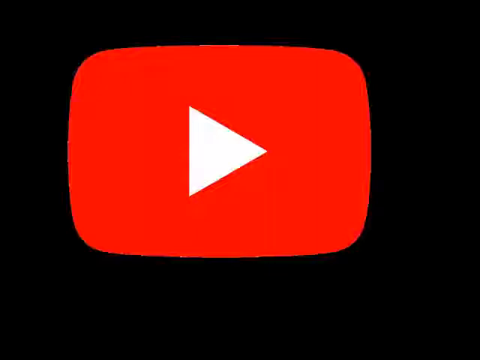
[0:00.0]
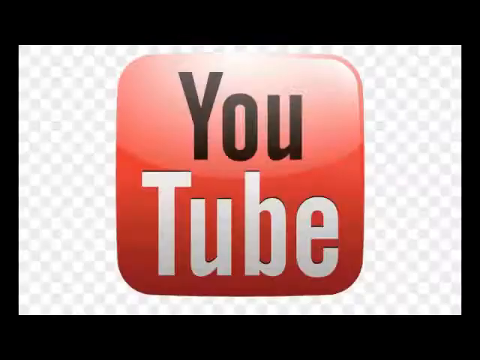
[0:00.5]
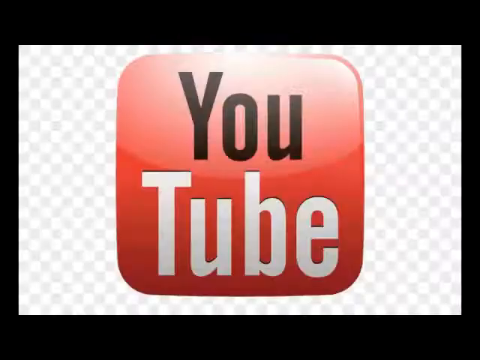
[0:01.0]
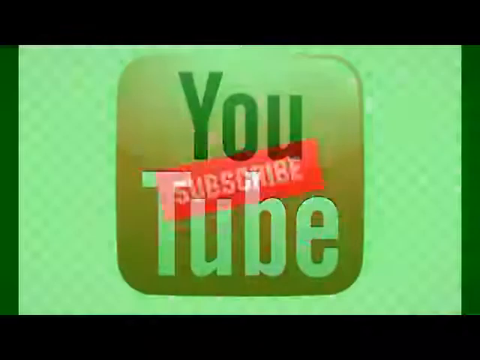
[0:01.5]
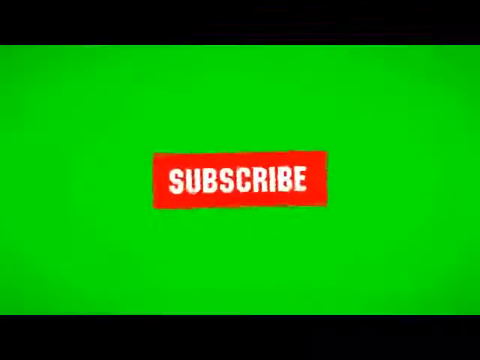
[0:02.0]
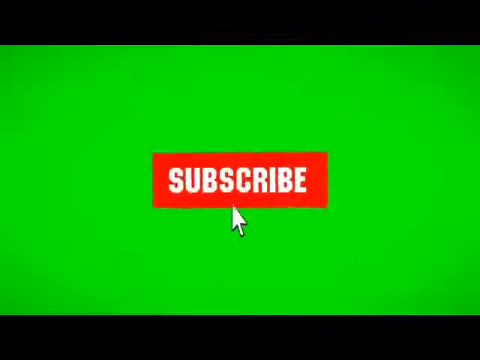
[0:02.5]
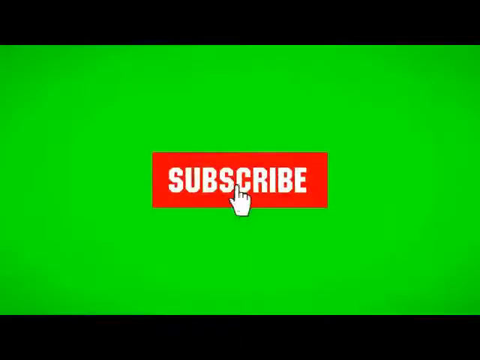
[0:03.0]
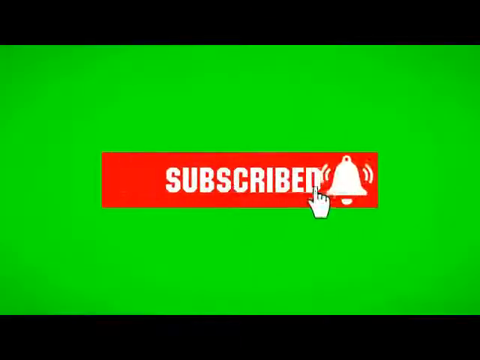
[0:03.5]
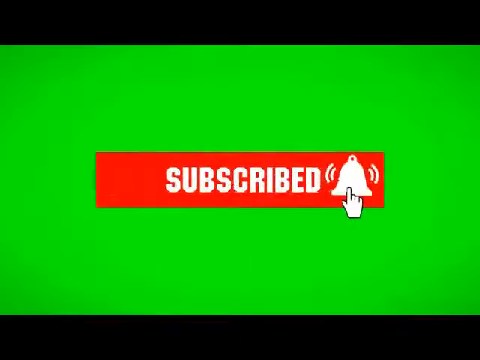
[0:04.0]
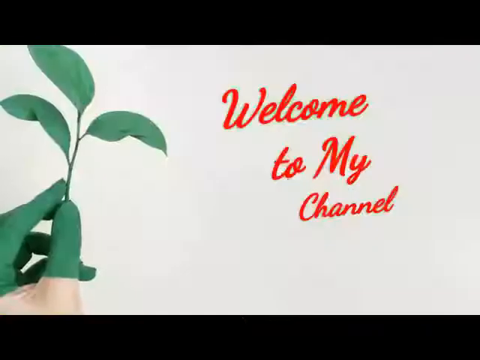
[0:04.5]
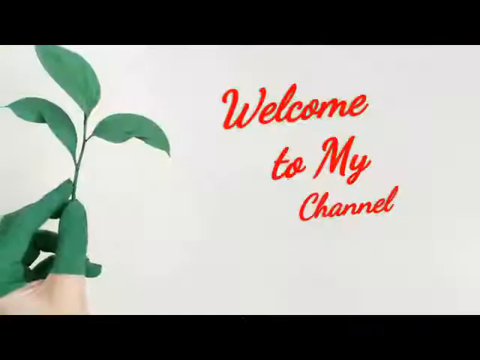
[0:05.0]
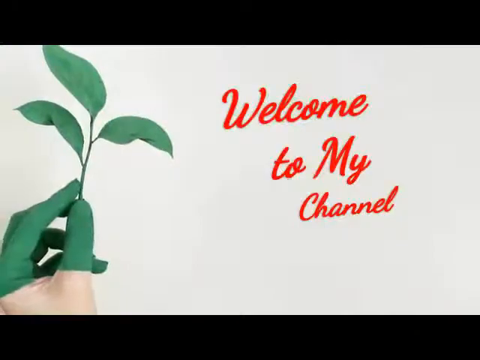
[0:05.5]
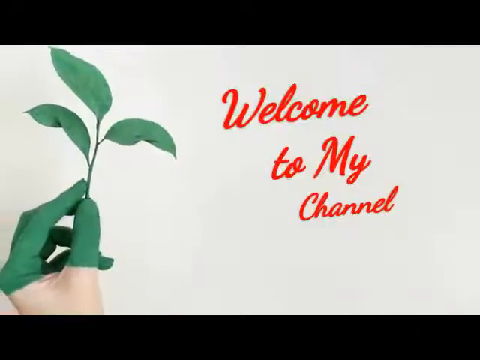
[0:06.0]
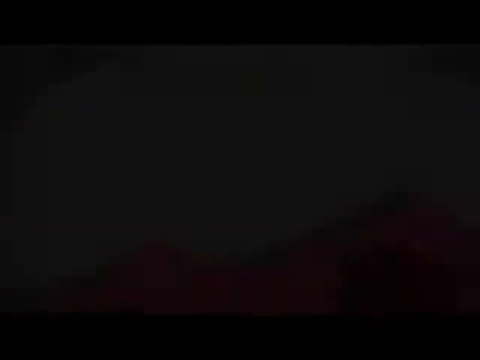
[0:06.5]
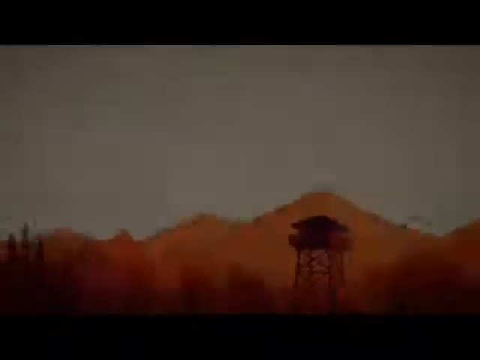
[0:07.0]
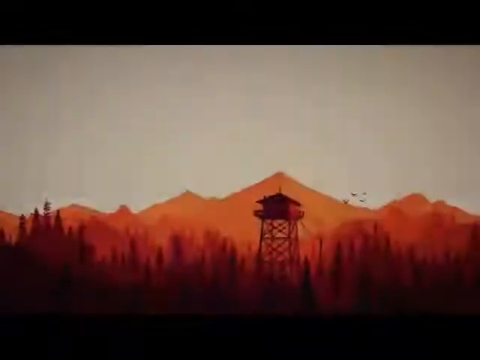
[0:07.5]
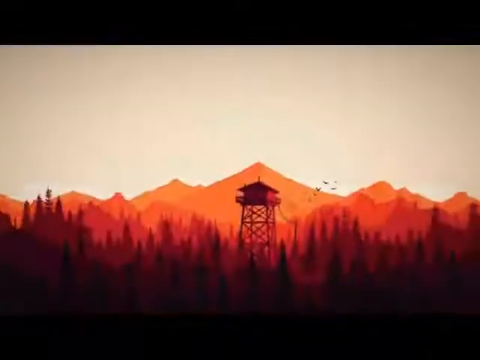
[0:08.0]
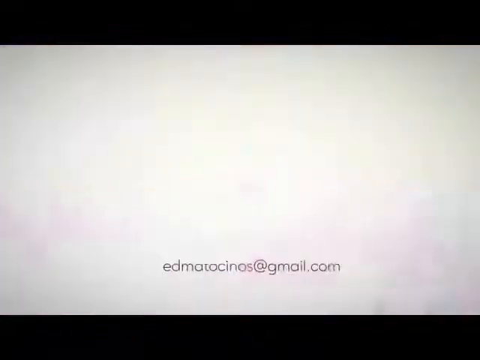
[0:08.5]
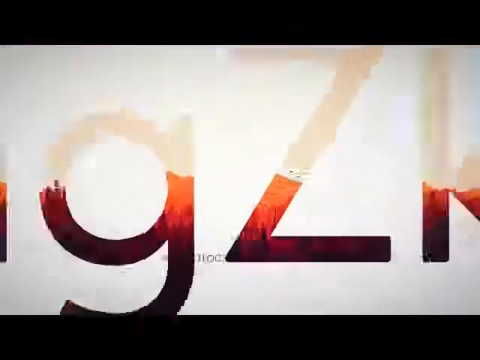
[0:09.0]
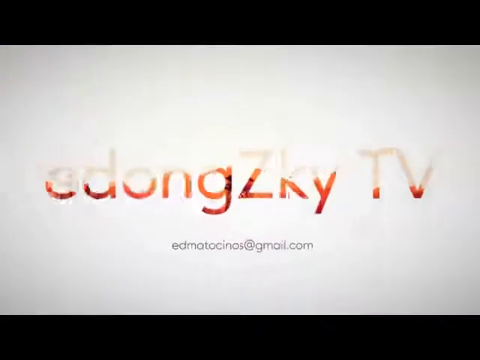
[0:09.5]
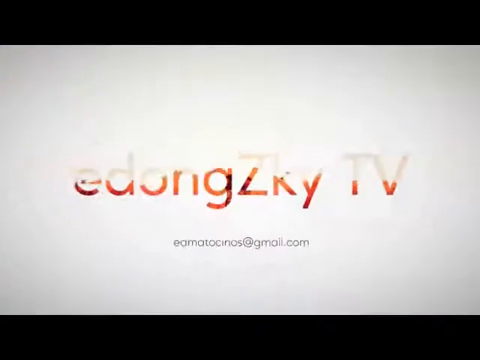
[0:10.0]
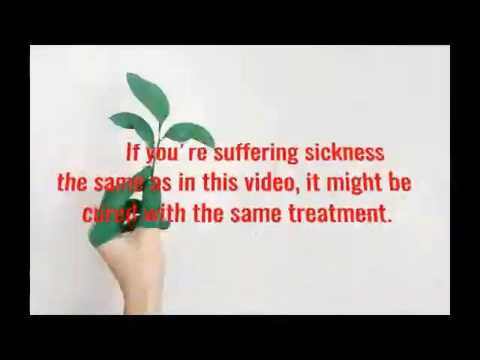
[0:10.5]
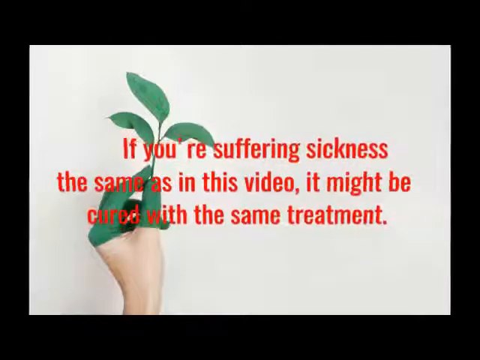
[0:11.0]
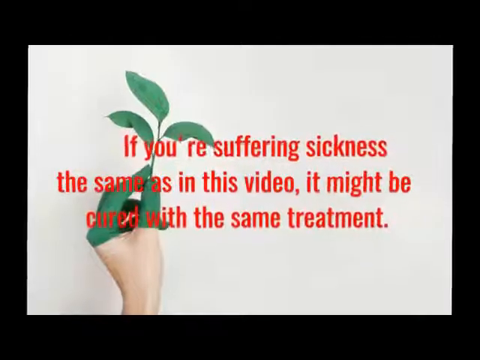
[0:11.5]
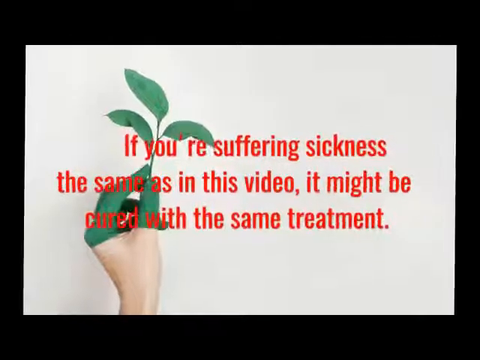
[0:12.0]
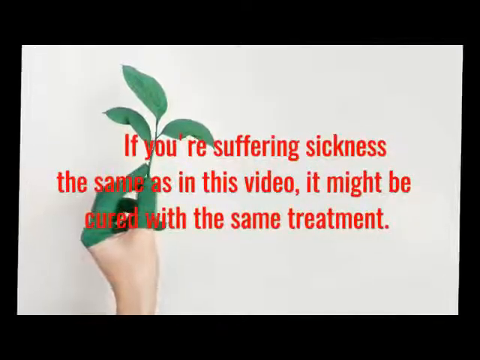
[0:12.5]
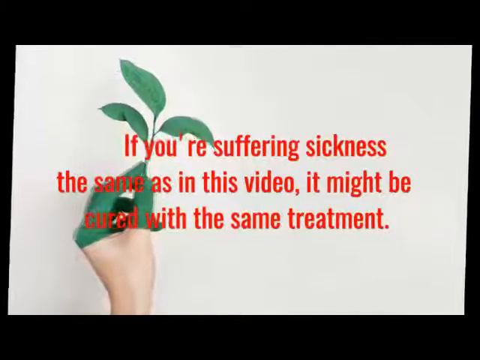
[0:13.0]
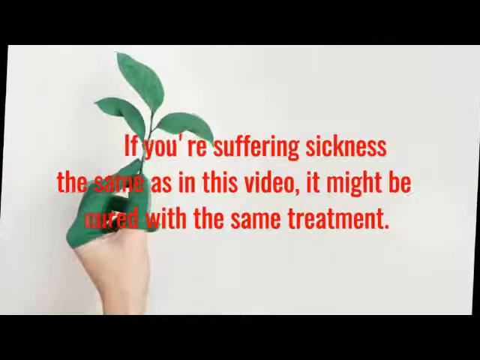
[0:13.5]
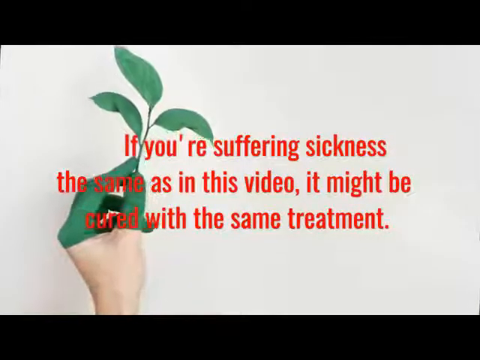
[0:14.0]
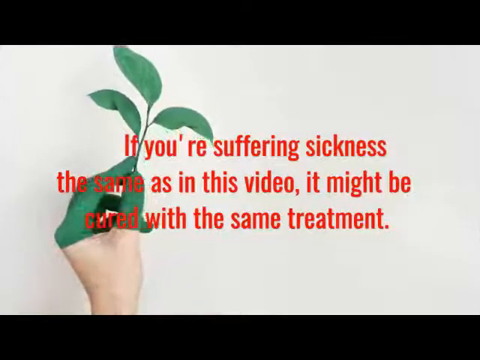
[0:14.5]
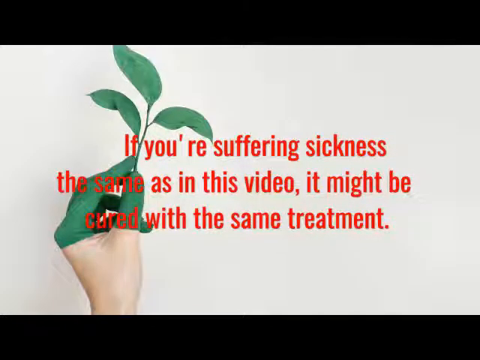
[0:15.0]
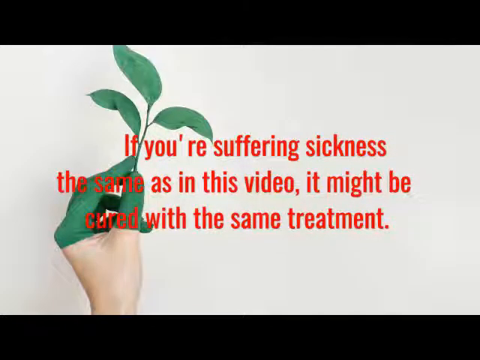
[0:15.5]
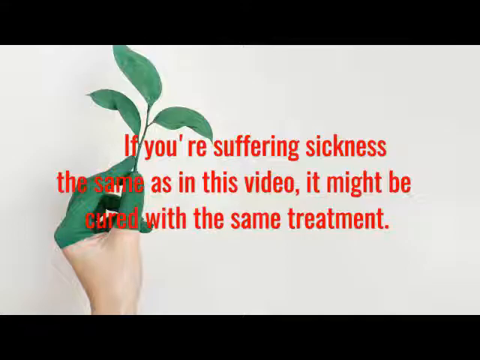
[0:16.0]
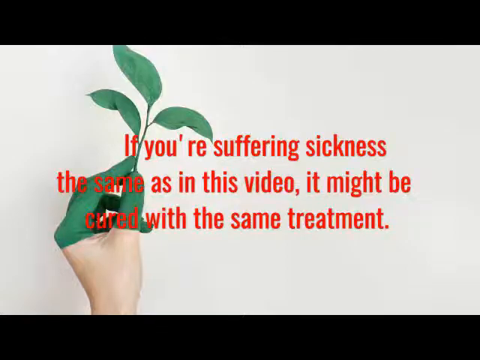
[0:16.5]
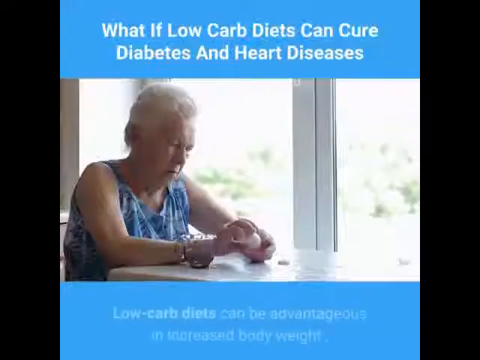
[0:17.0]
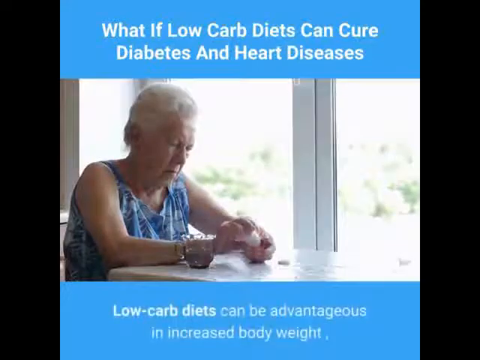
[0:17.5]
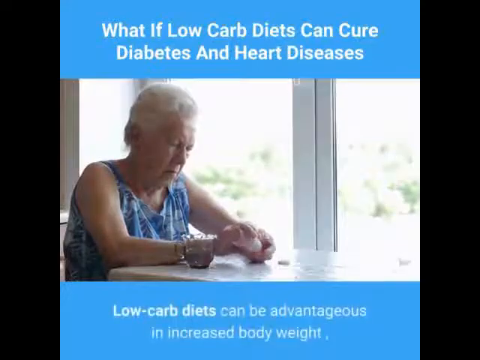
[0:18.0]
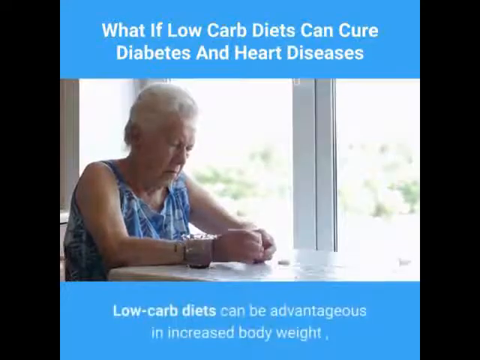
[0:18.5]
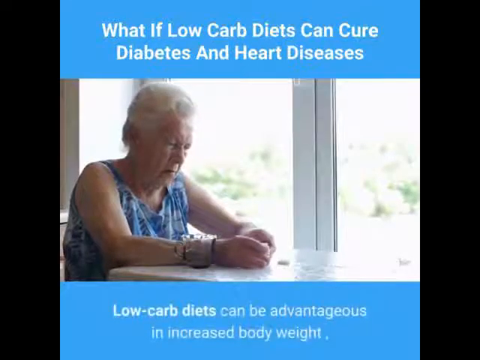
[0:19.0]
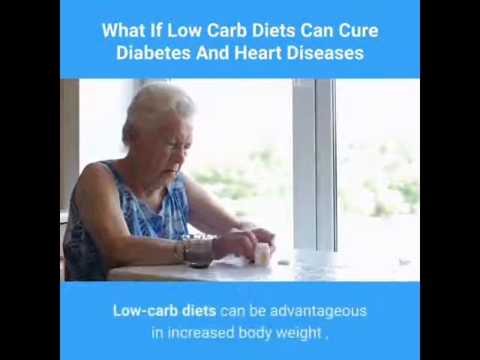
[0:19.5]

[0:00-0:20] What looks like a YouTube arrow and the YouTube insignia appear, followed by the word YouTube. A hand with its index finger out hits the subscribe button, and a bell rings as the finger touches it. Text reads "welcome to my channel", then "if you are suffering sickness, the same as in this video, it might be cured with the same treatment" and "What if low carb diets can cure diabetes?" An older woman with white hair, wearing a night dress like a nightgown, sits at a table. In her right hand she holds a bottle of what looks like pills and bangs it on her left hand. She has a clear mug with some liquid in it. She sits next to a door that looks like a sliding glass door; it is a bright day, and some greenery is visible outside. Text at the bottom reads "low carb diets can be dangerous".